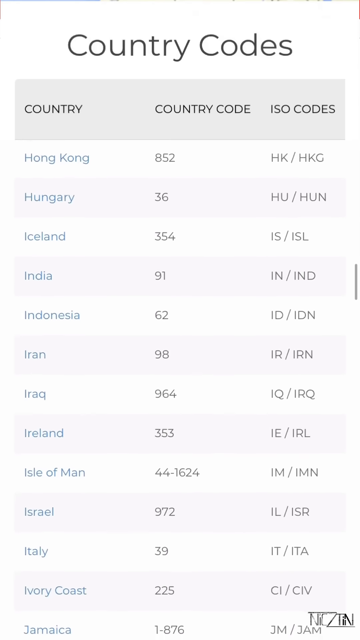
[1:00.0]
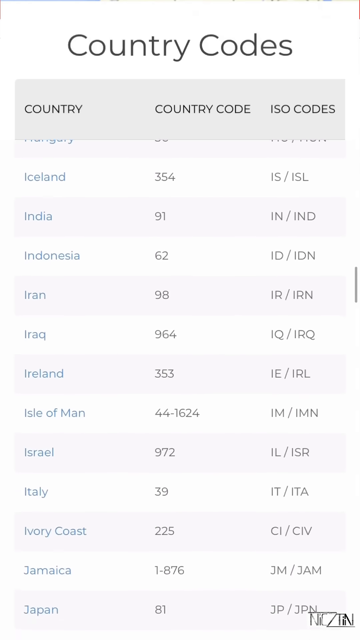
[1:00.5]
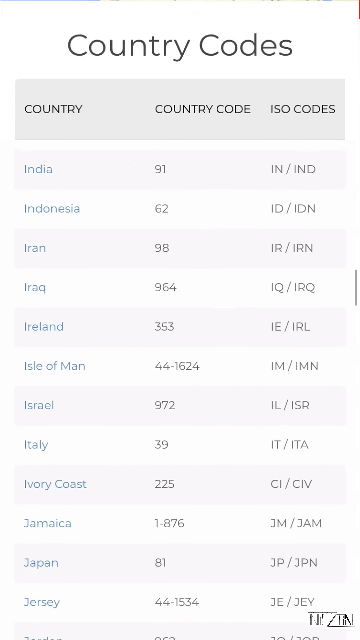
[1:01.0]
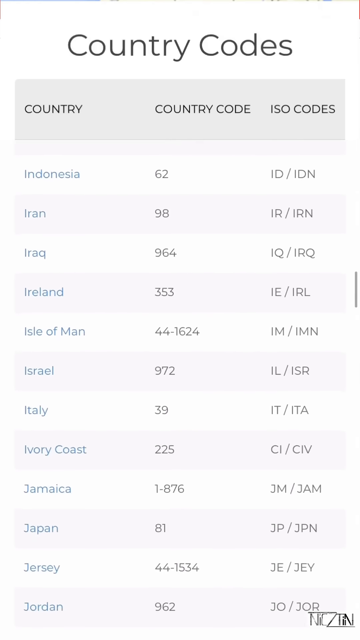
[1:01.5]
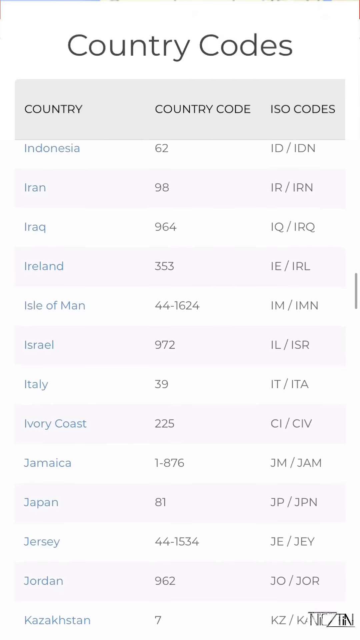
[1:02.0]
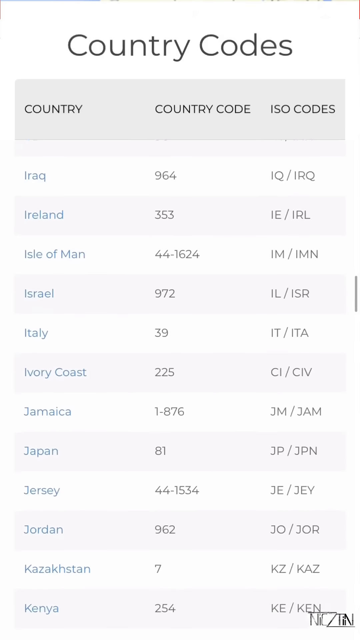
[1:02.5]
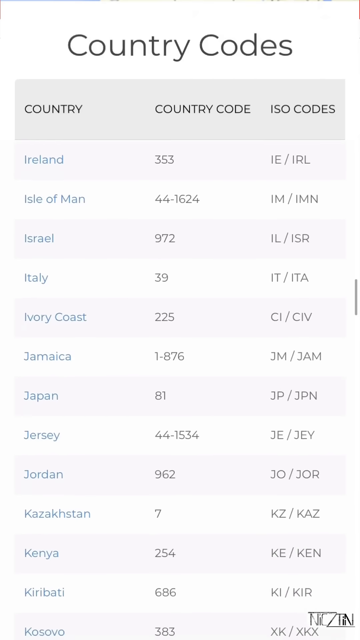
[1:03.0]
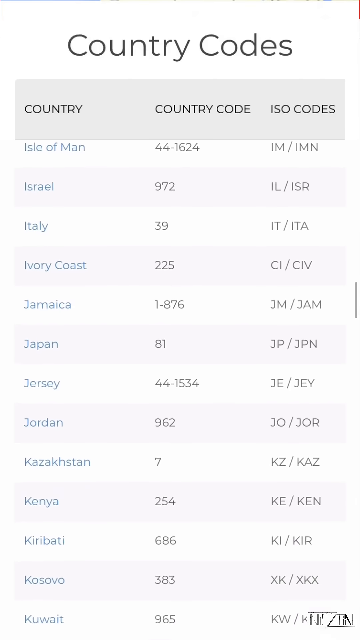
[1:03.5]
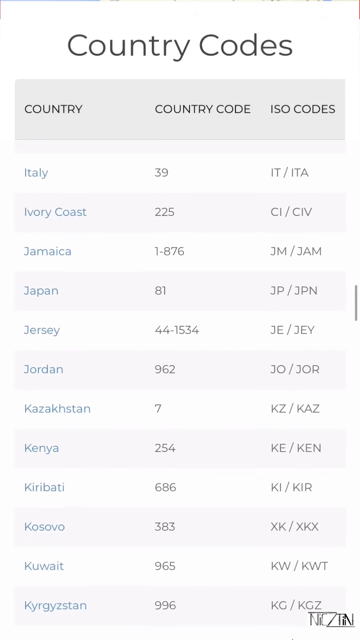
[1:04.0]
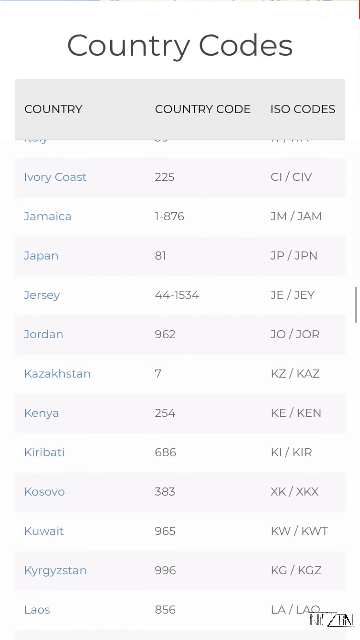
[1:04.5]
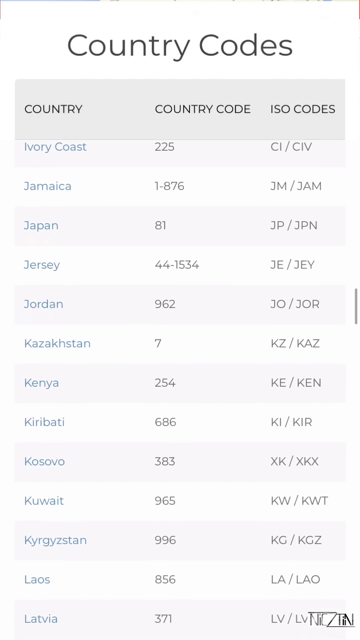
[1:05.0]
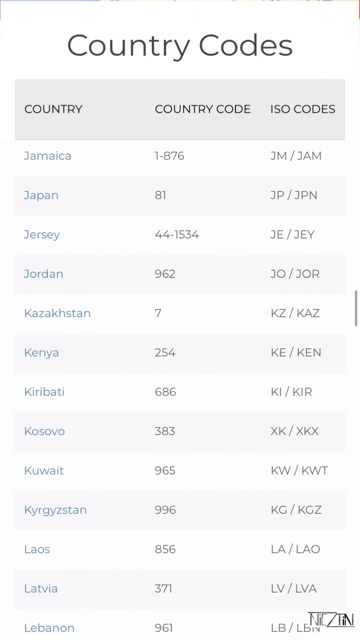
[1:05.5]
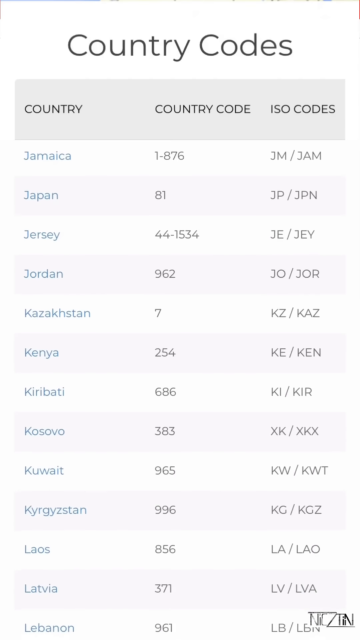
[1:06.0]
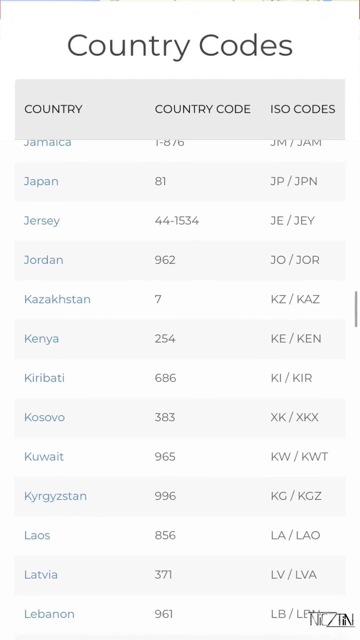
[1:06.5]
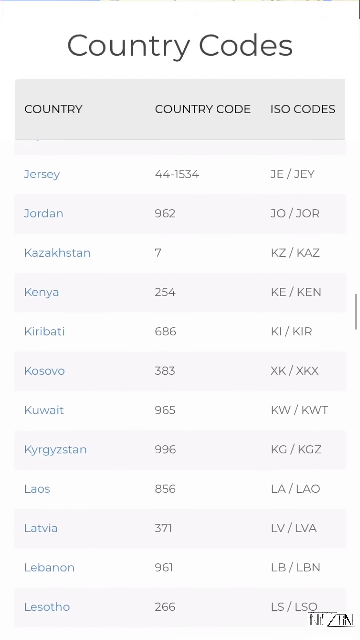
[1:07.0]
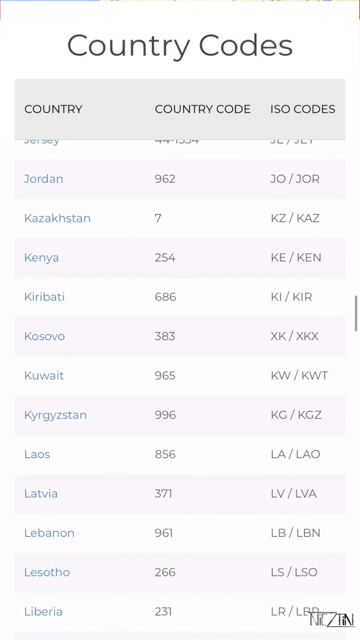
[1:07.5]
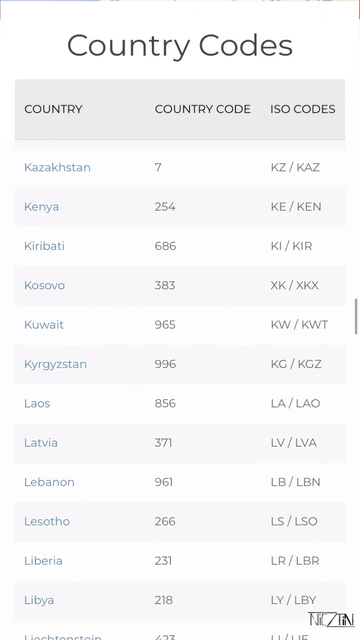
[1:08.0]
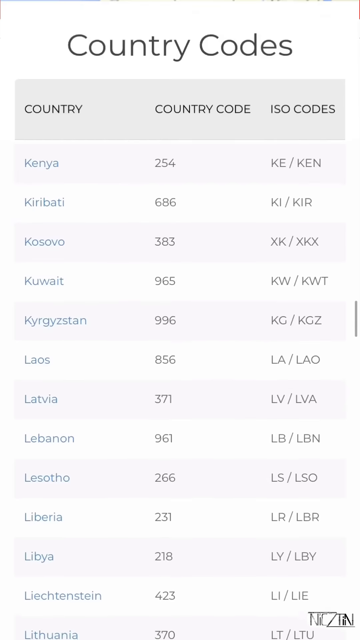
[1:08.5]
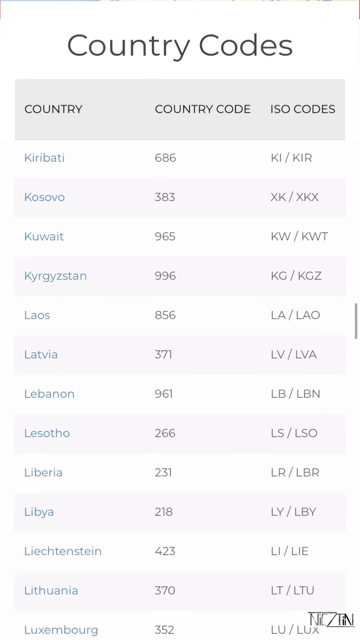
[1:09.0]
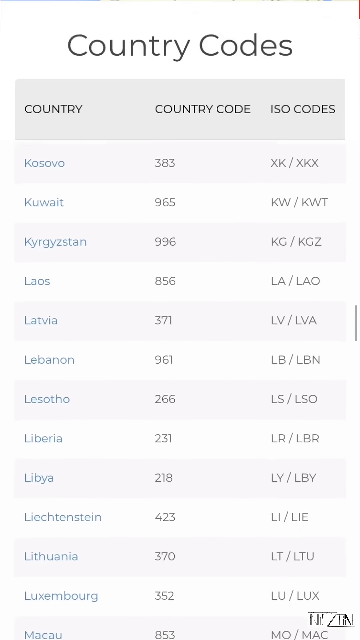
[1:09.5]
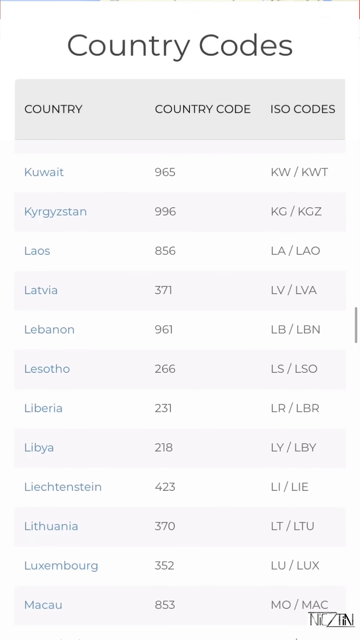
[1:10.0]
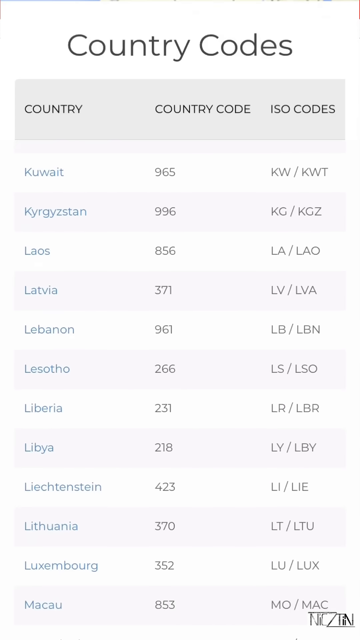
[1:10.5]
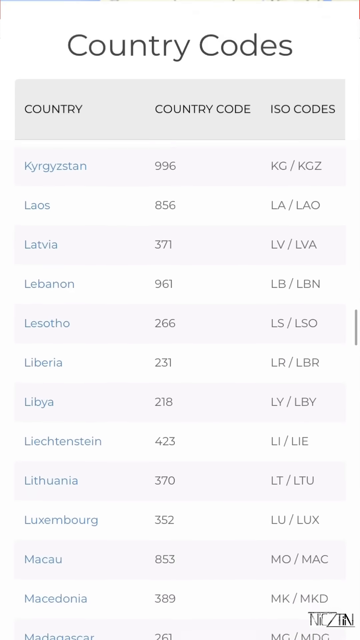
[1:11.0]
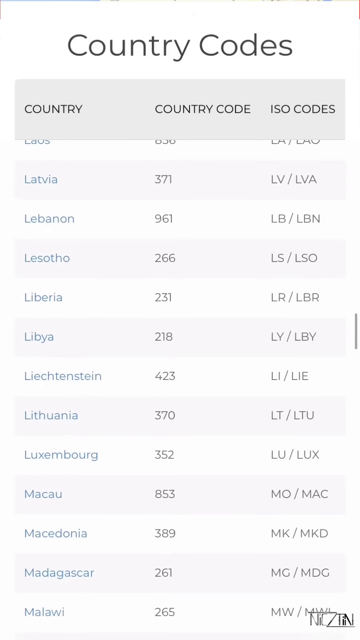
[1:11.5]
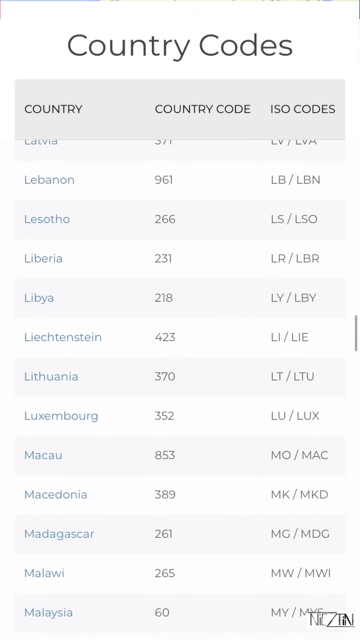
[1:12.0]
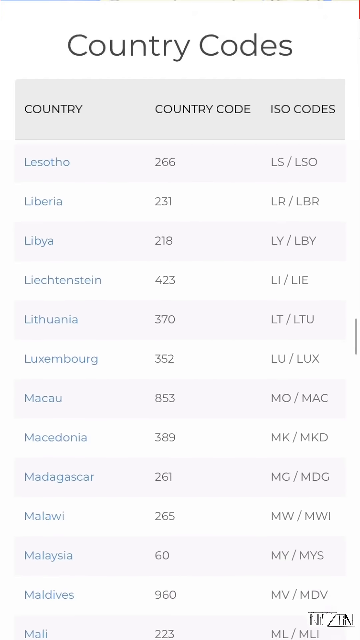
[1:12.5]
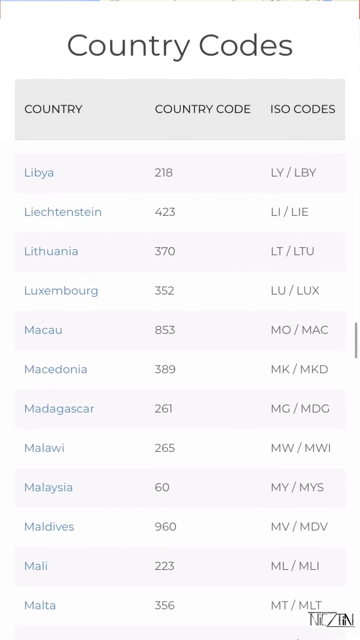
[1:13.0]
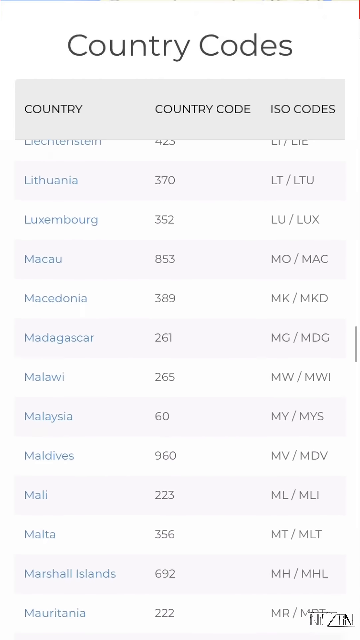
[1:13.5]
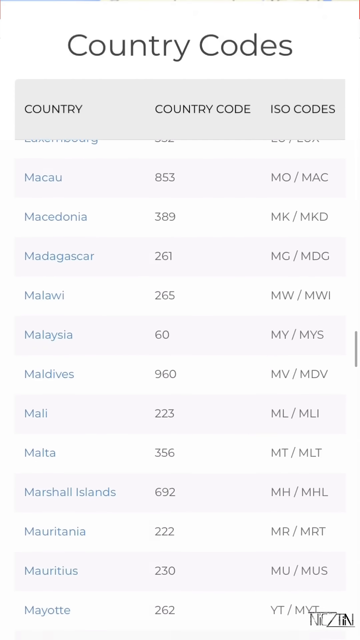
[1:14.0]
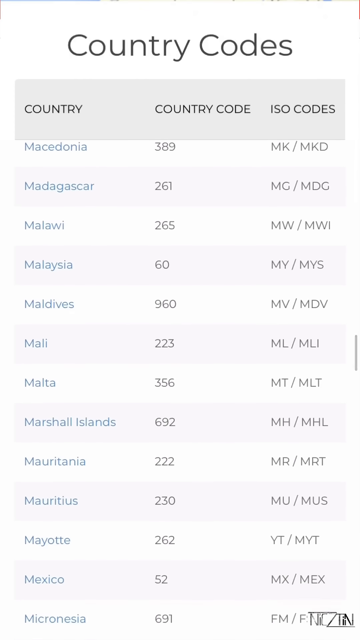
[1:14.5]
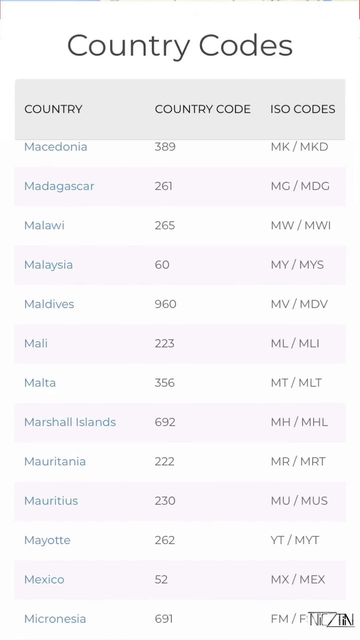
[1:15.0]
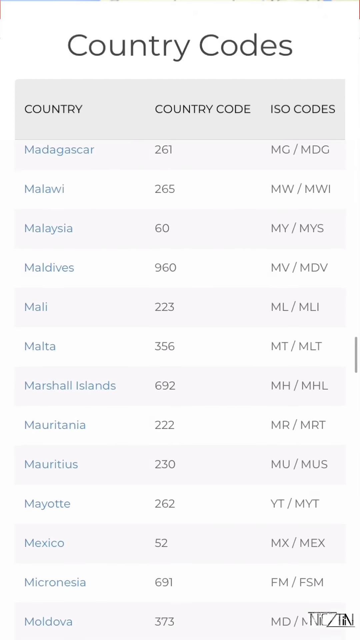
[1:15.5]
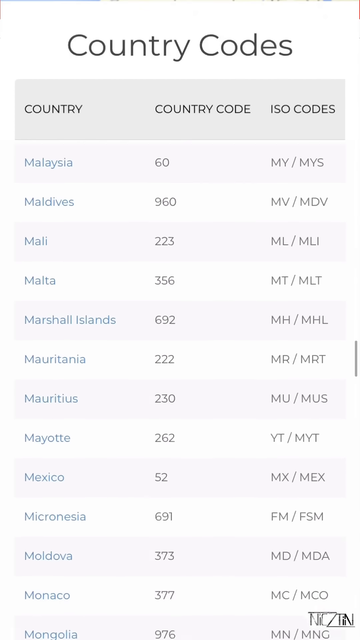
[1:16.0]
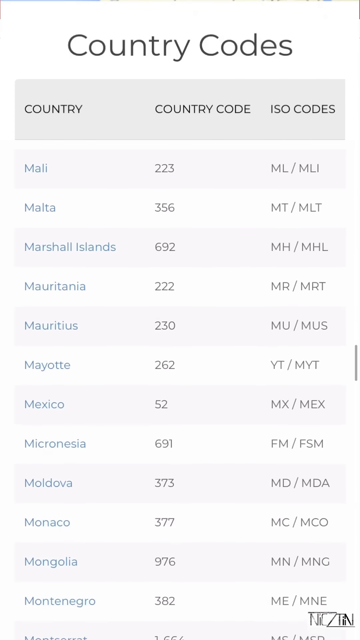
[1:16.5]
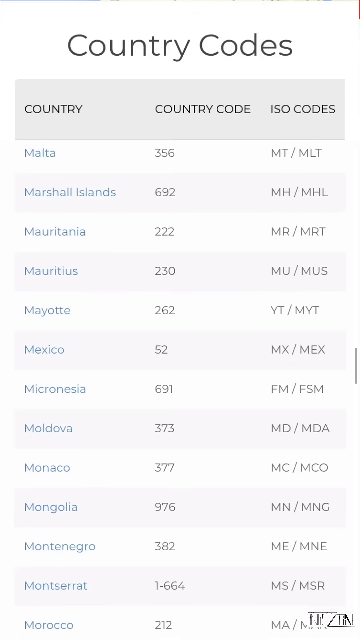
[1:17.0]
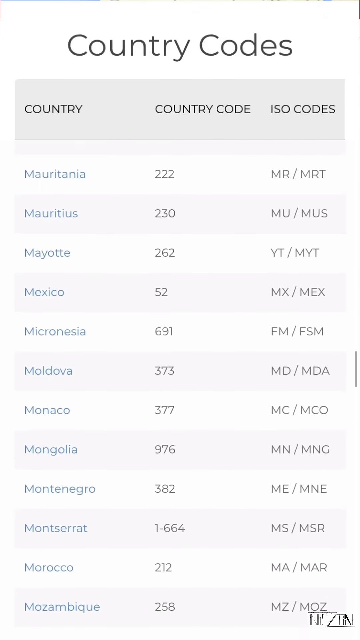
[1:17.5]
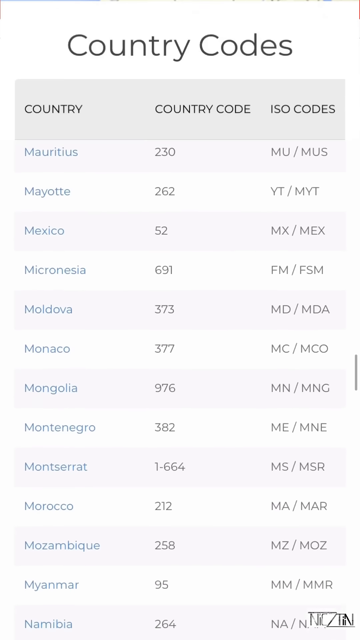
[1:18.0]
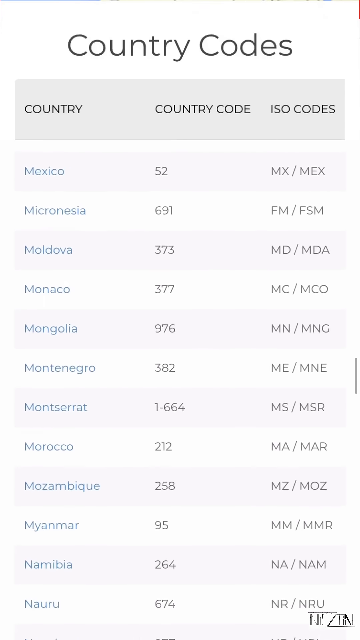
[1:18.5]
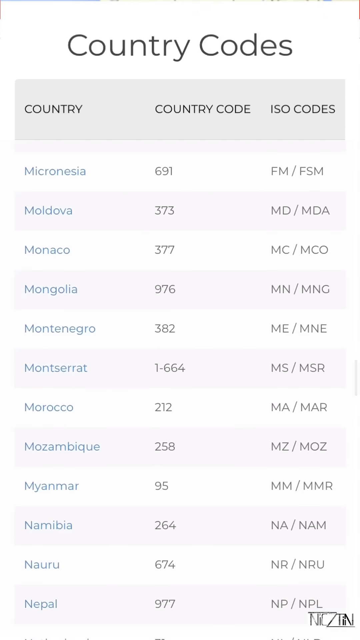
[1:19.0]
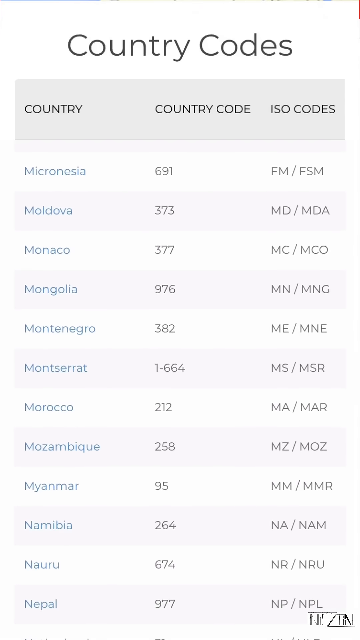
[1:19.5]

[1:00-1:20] The title "country codes" runs along the top, with the headings "country," "country code," and "ISO code." The list shows Hong Kong and Hungary near the top, followed by the I's, then scrolls through the J's, K's, L's, and into the M's, passing entries such as Kyrgyzstan, Lesotho, Marshall Islands, and Isle of Man. Under "country code" the numbers are sometimes two digits, like 36 or 91, and sometimes three, like Hong Kong's 852.